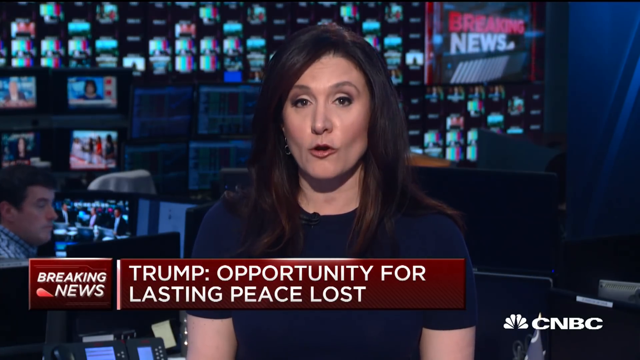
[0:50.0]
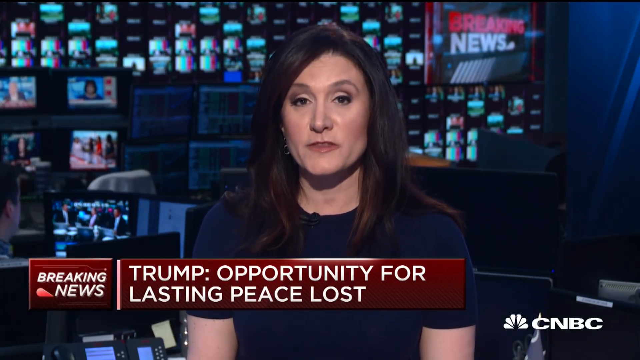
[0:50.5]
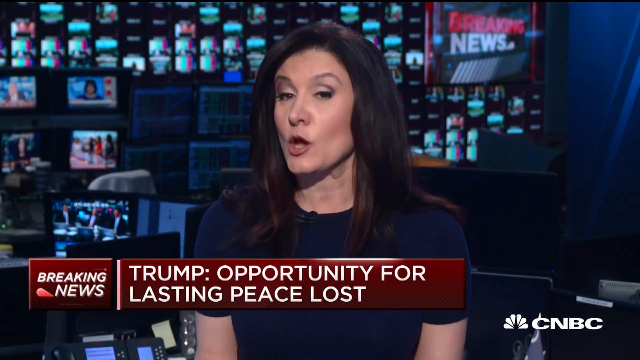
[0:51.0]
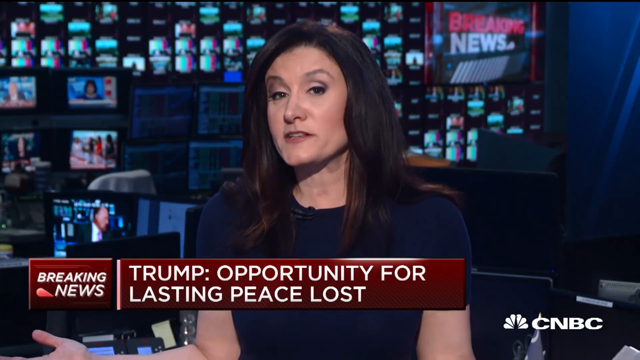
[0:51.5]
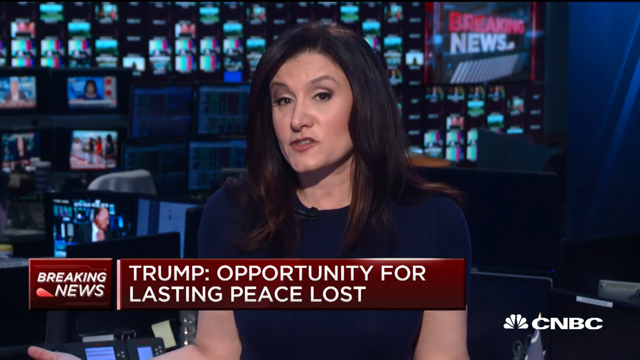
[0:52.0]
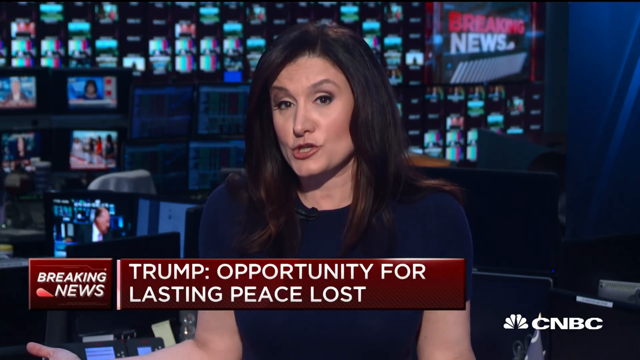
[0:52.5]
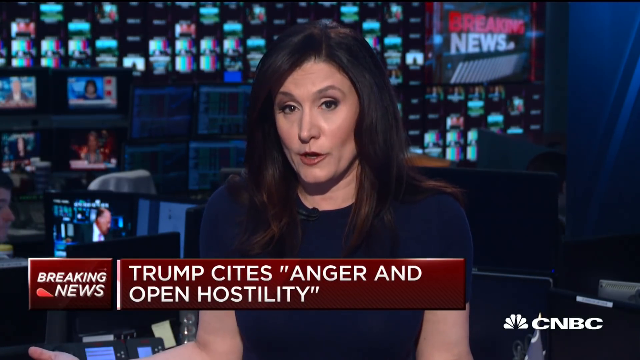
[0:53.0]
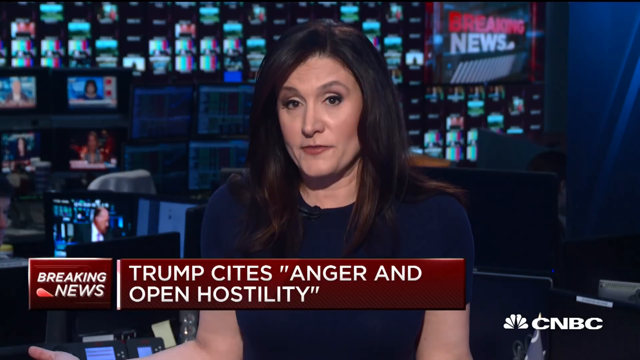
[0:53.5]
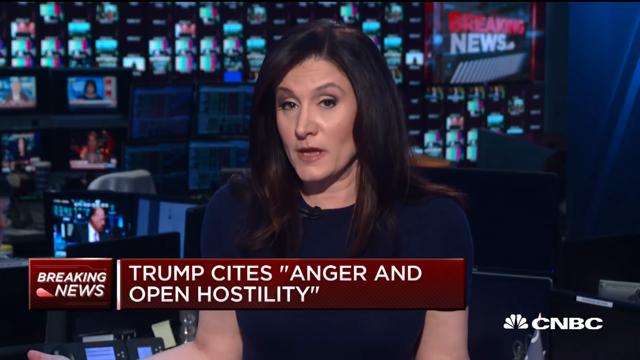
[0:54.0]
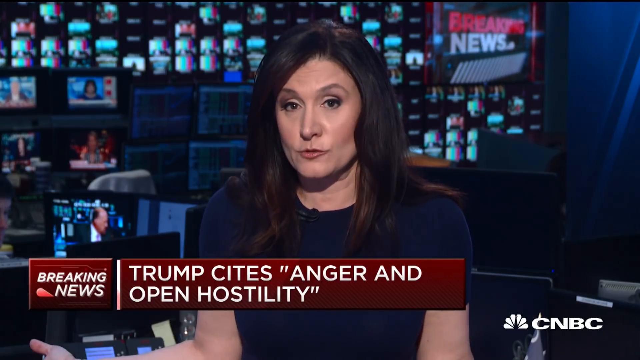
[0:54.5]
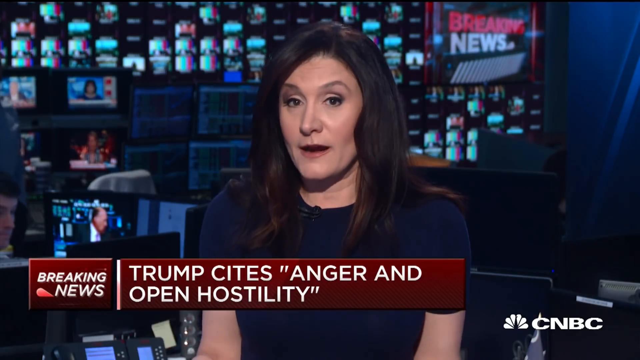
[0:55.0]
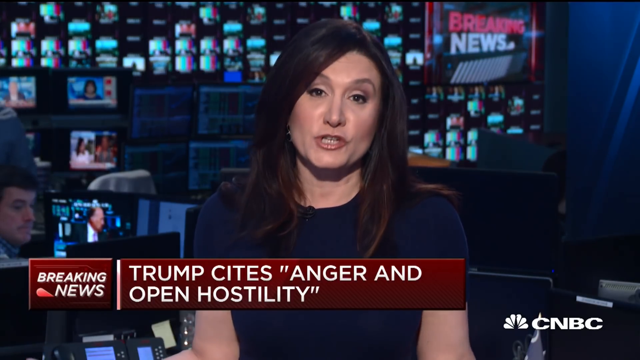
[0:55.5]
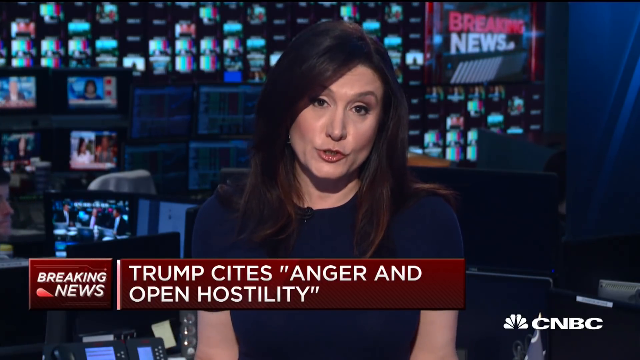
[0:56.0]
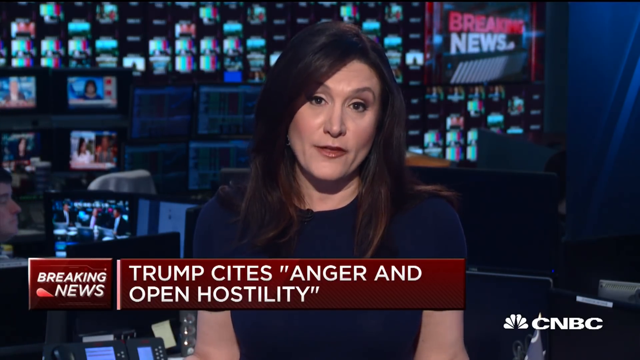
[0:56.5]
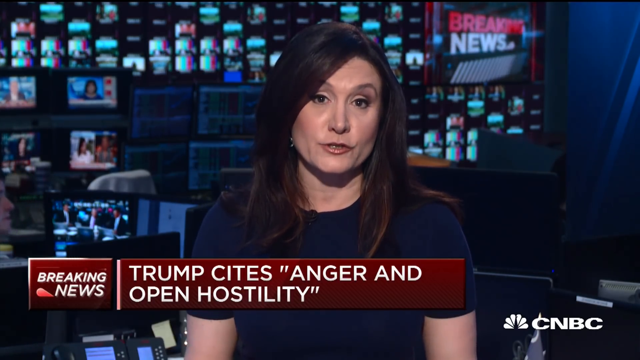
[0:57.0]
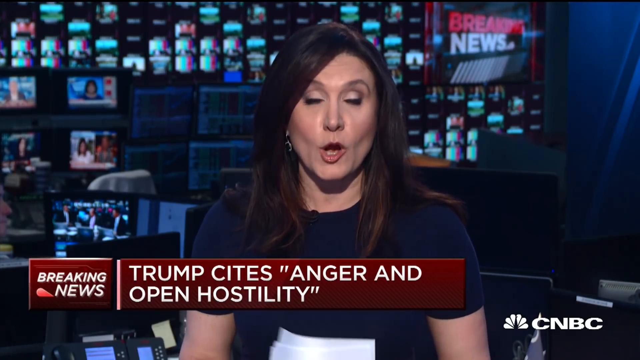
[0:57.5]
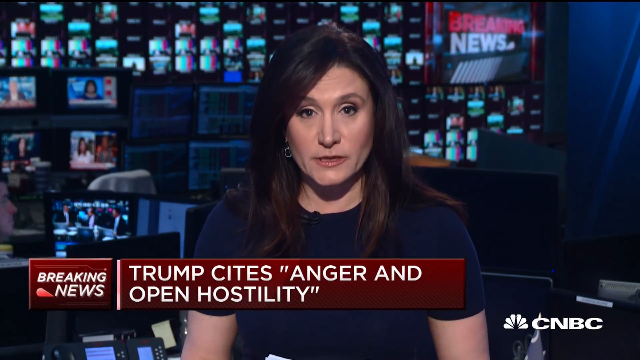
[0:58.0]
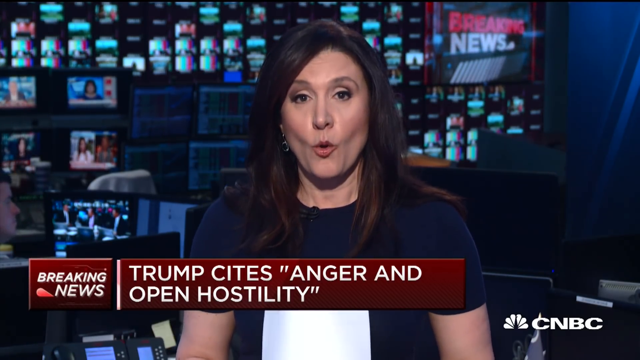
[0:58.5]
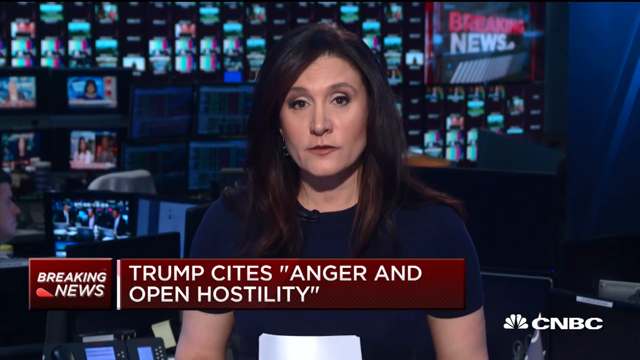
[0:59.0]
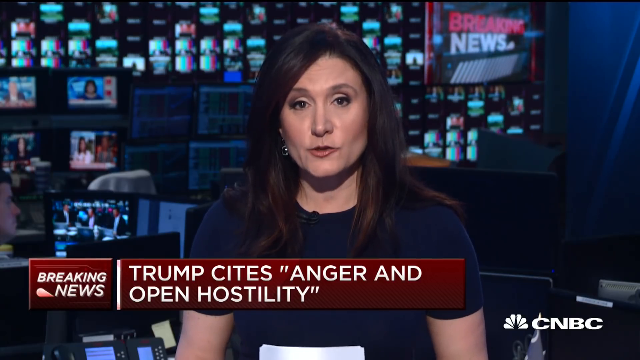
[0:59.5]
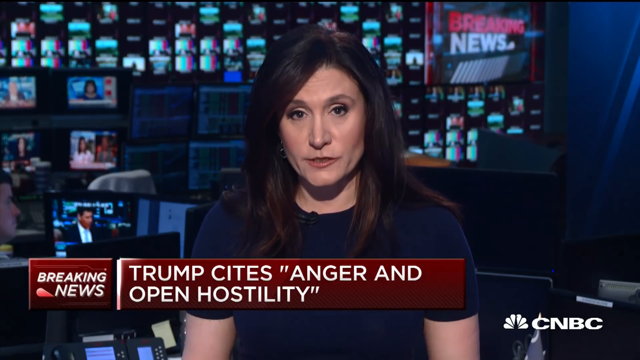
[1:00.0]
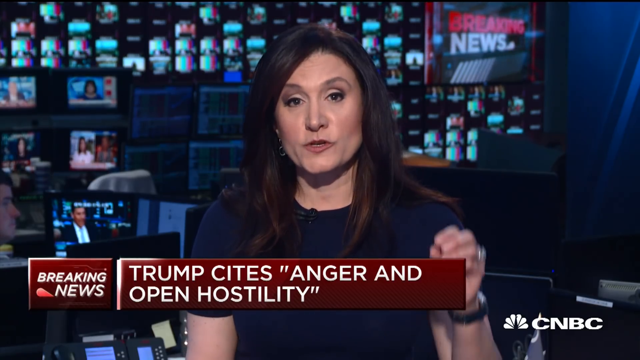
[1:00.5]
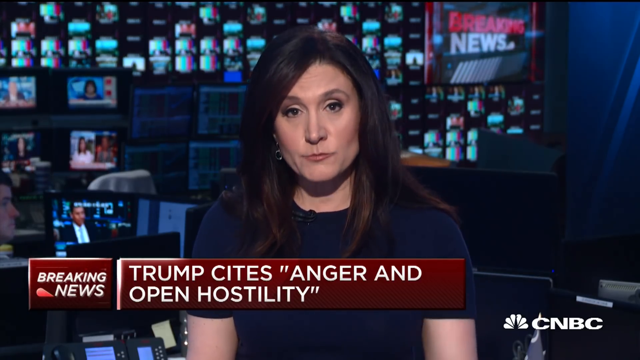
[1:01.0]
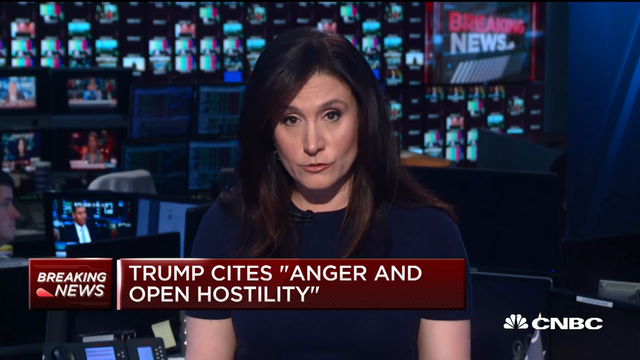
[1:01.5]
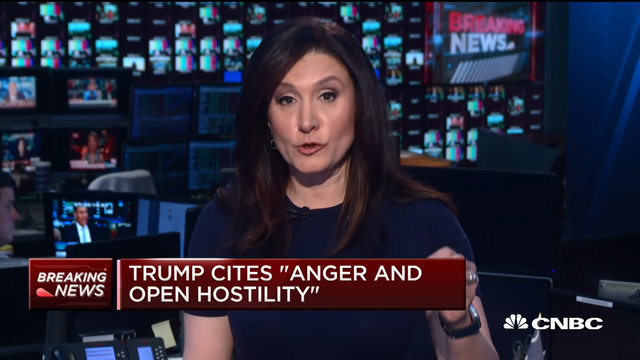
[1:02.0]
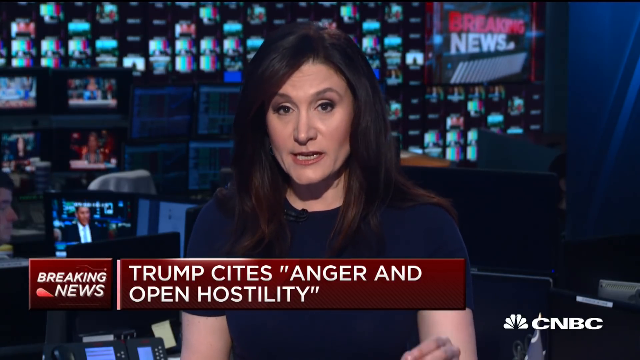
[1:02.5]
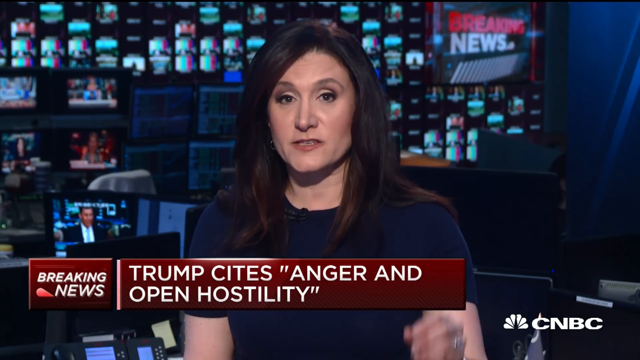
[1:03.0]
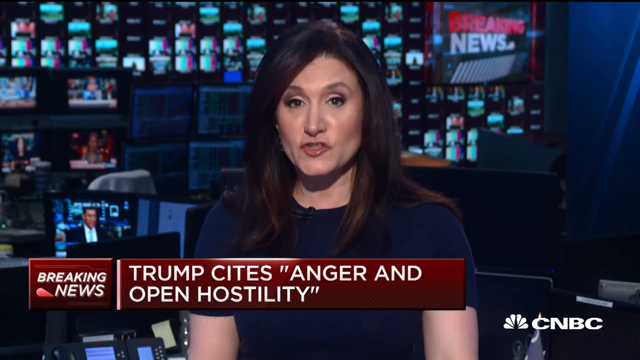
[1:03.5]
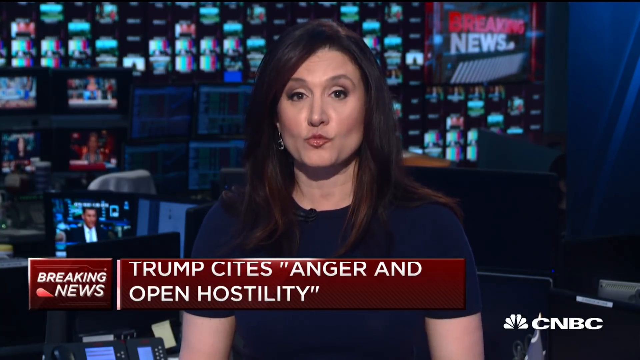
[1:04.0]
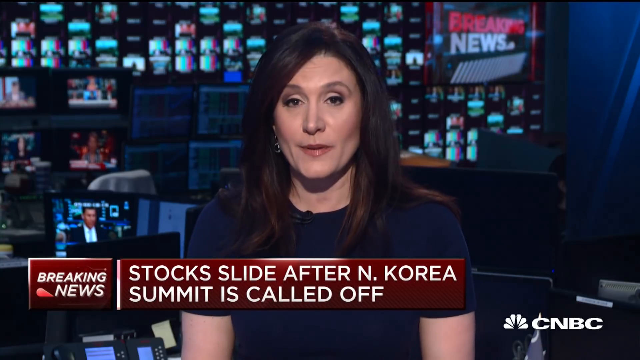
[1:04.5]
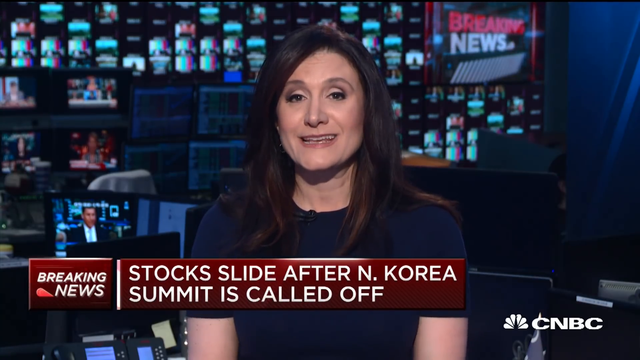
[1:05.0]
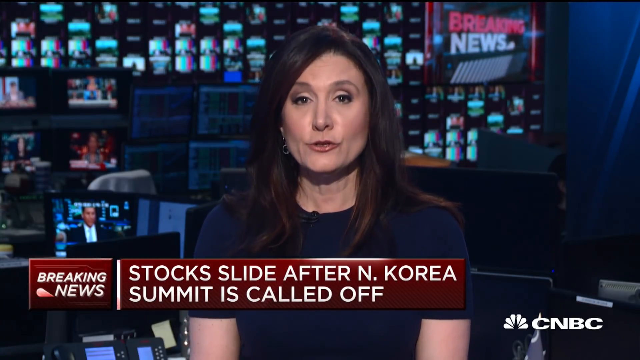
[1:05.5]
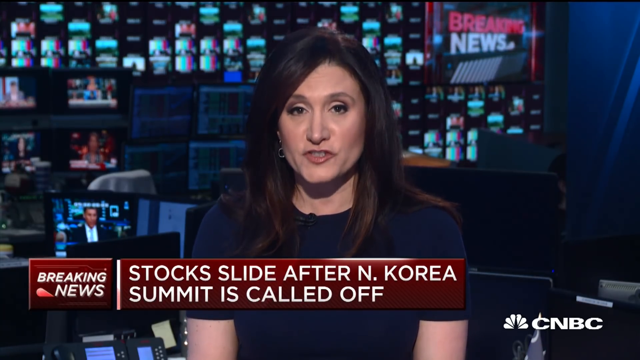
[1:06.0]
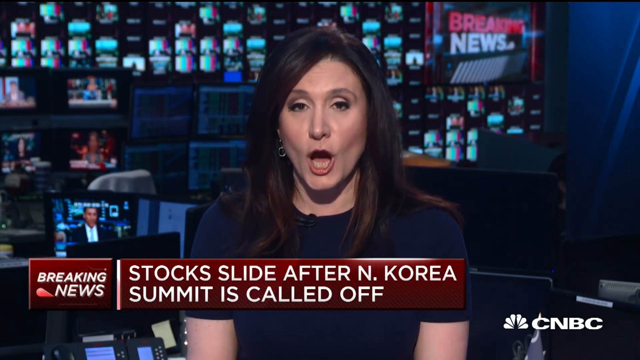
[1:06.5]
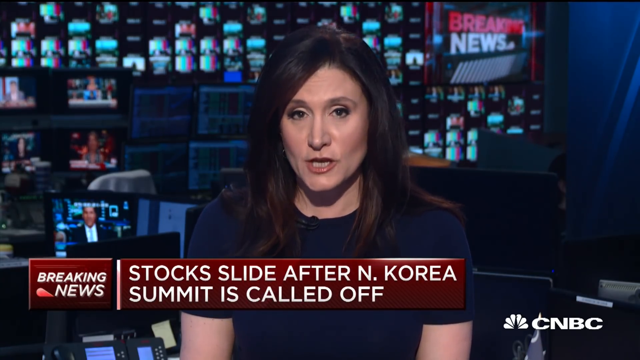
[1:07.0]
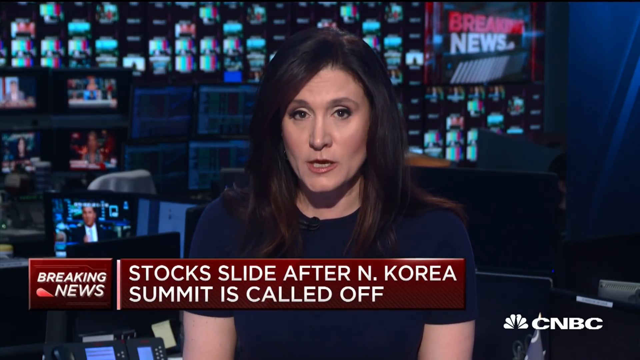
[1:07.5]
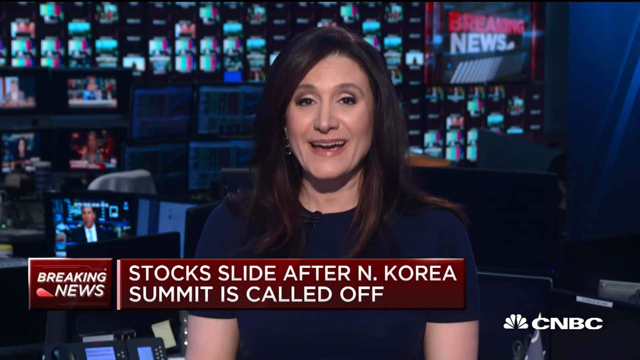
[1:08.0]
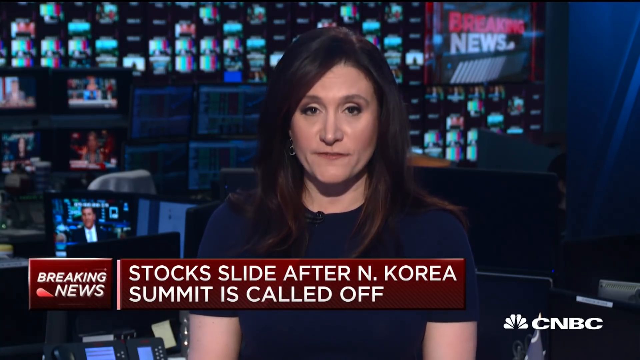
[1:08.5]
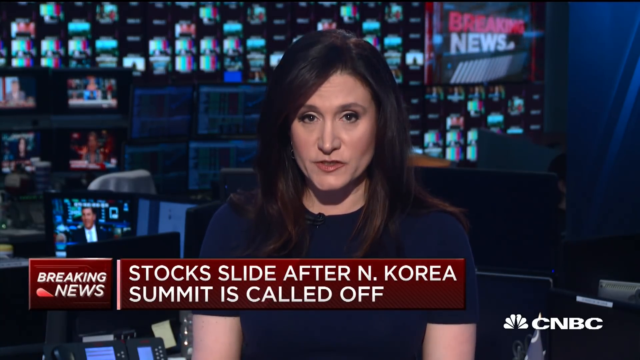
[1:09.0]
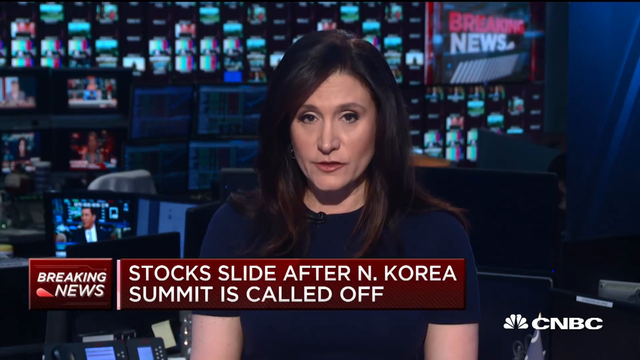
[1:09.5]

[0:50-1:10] The journalist continues her report. On screen, text reads "stock slide after North Korea summit is called off," and a negative, downward market reaction can be seen on the screen.